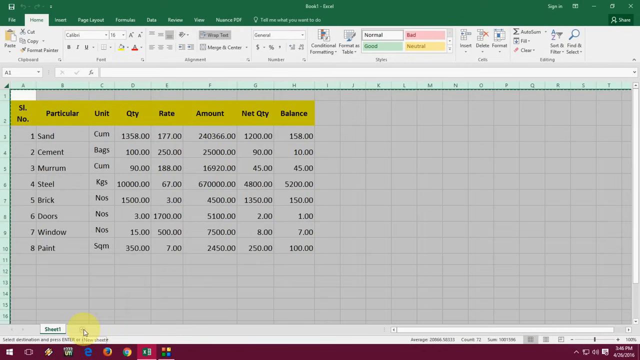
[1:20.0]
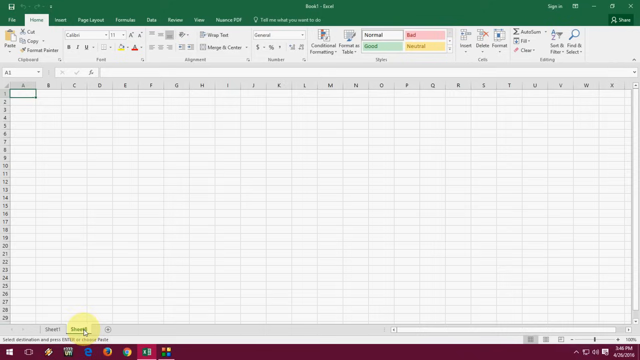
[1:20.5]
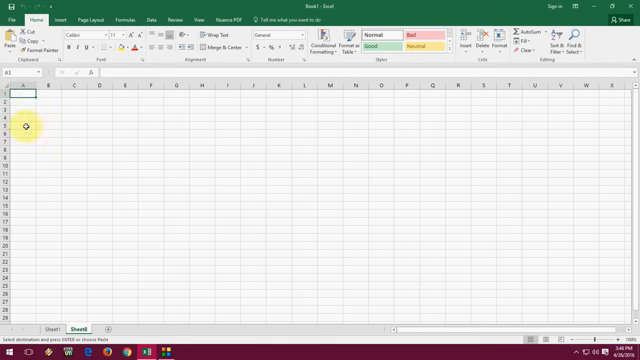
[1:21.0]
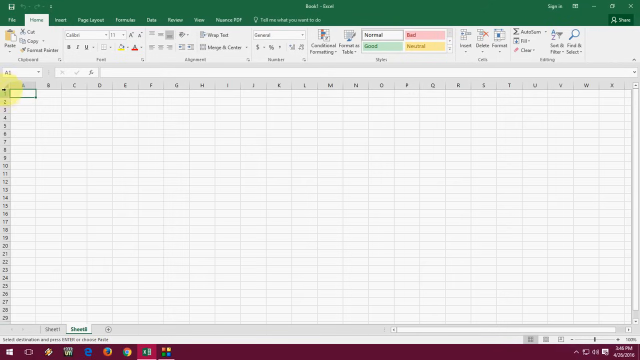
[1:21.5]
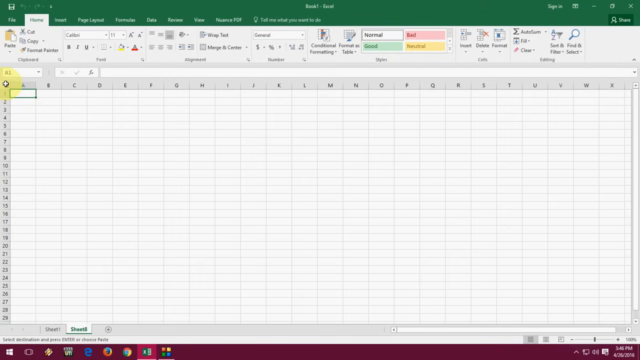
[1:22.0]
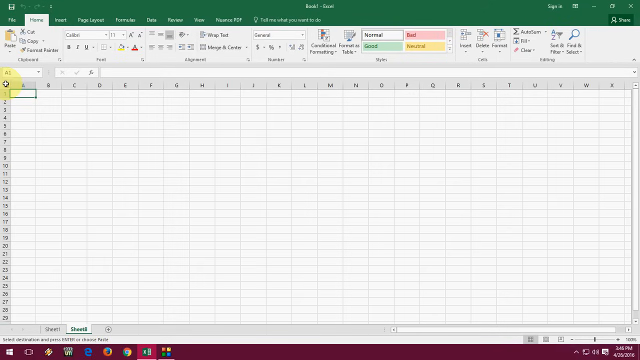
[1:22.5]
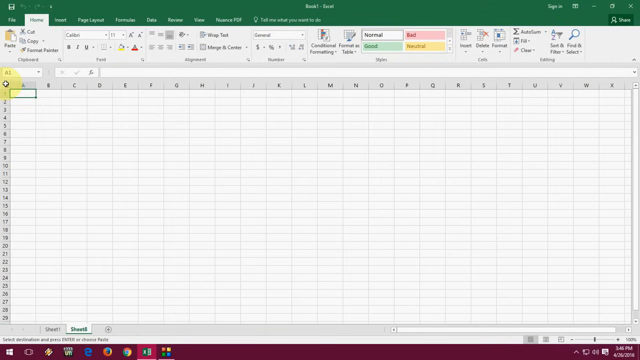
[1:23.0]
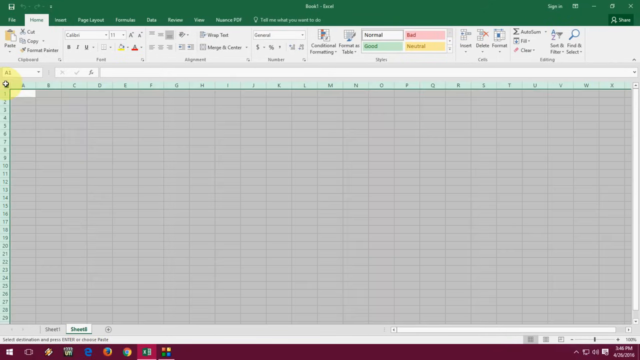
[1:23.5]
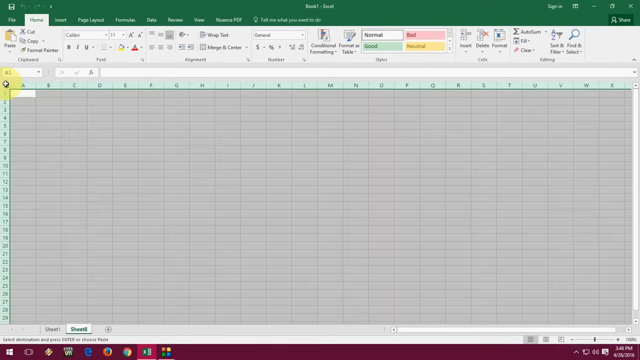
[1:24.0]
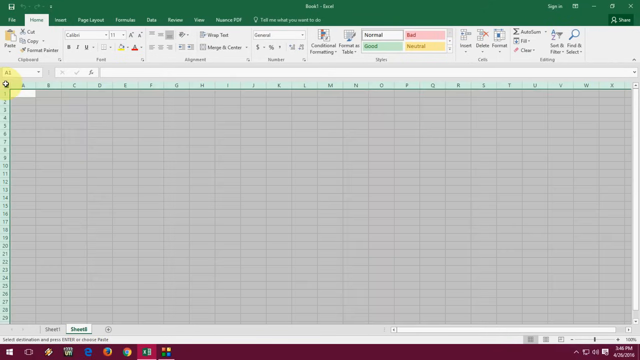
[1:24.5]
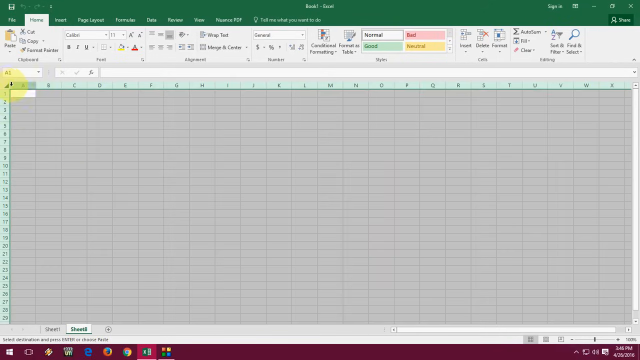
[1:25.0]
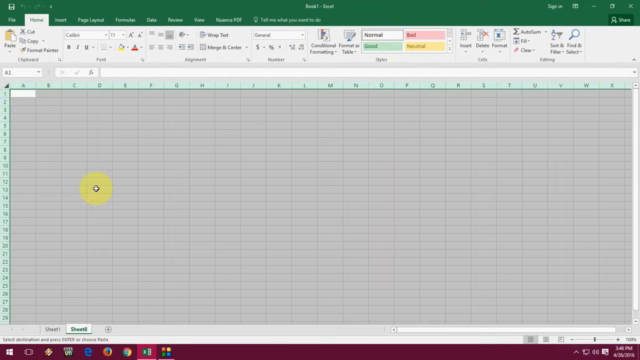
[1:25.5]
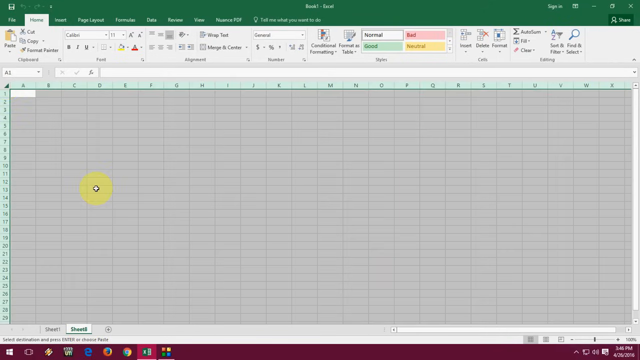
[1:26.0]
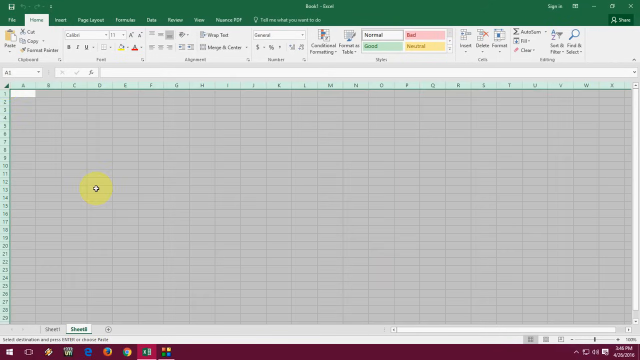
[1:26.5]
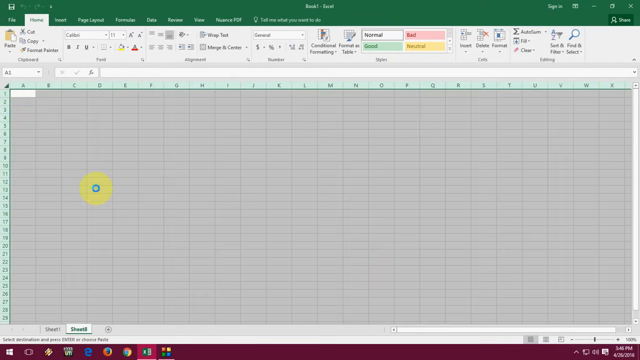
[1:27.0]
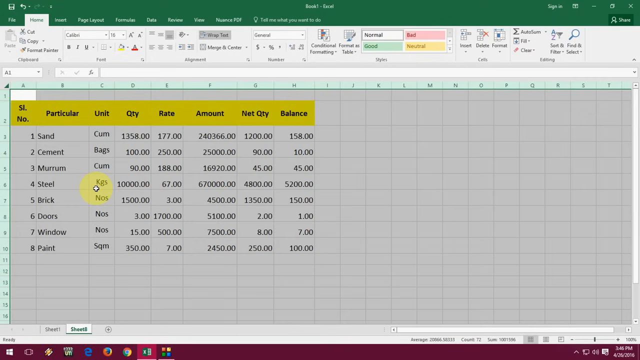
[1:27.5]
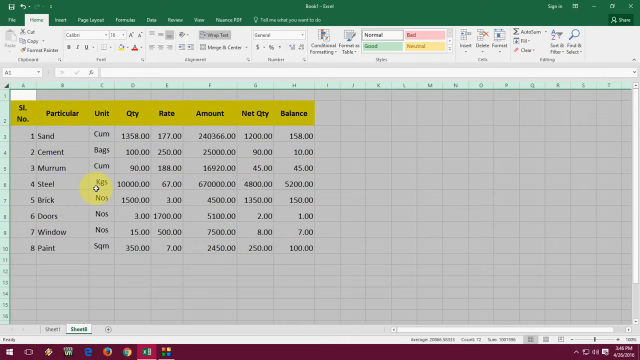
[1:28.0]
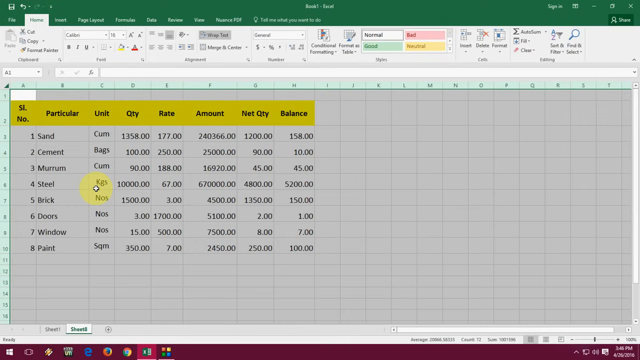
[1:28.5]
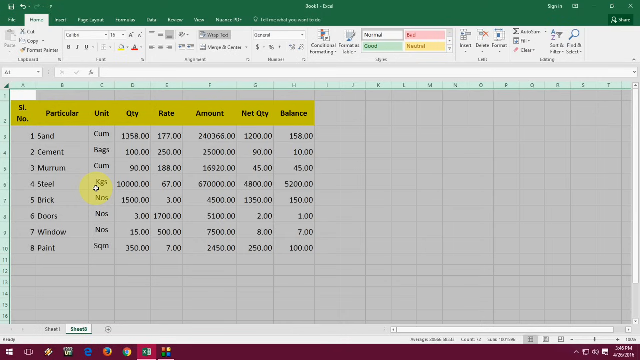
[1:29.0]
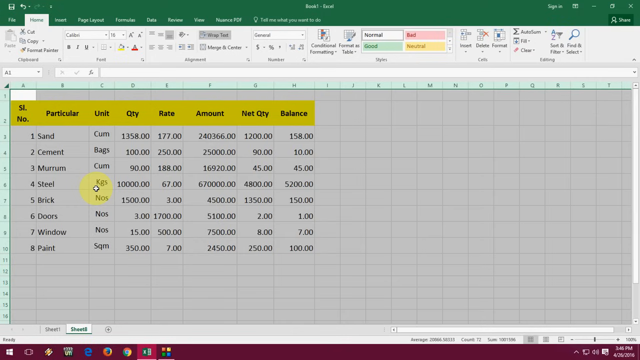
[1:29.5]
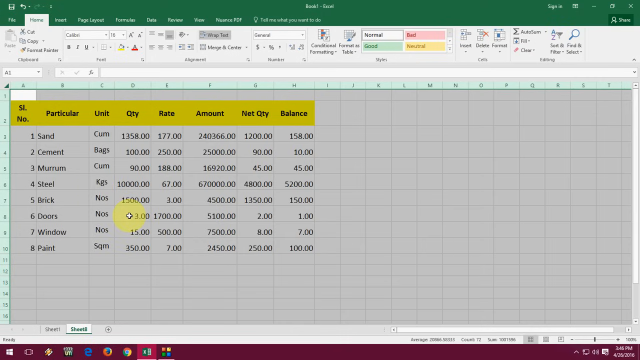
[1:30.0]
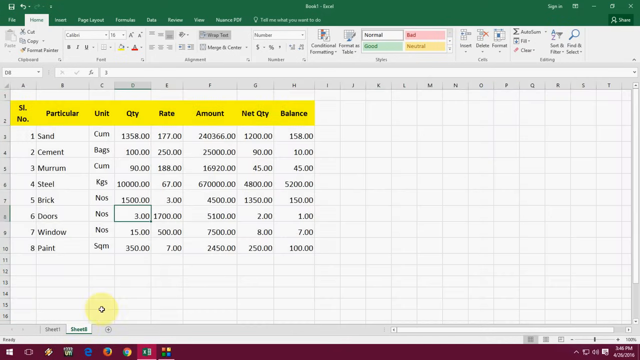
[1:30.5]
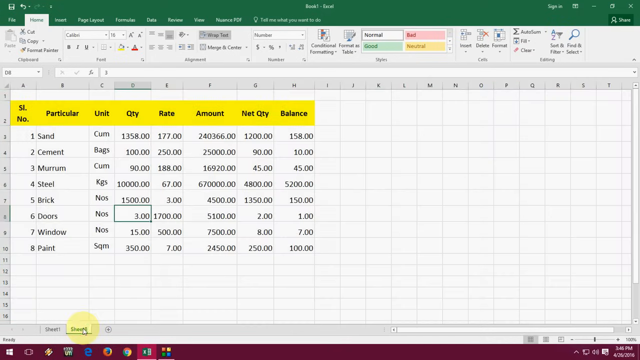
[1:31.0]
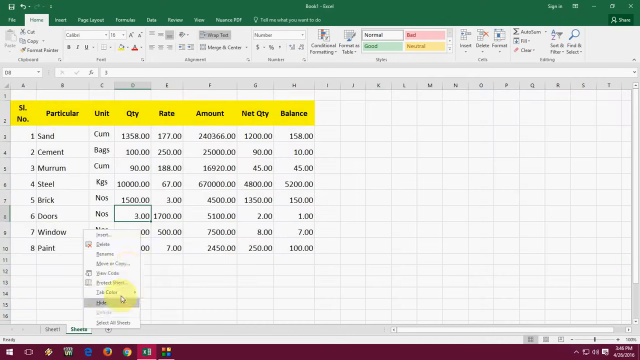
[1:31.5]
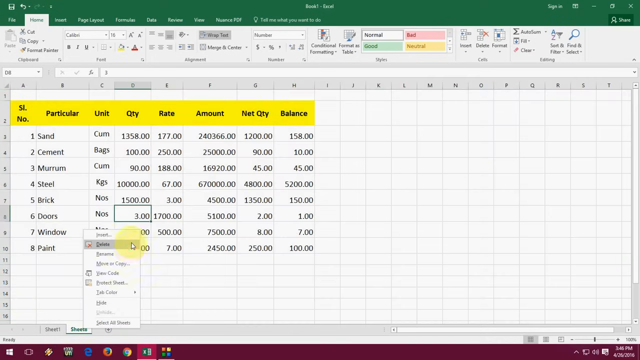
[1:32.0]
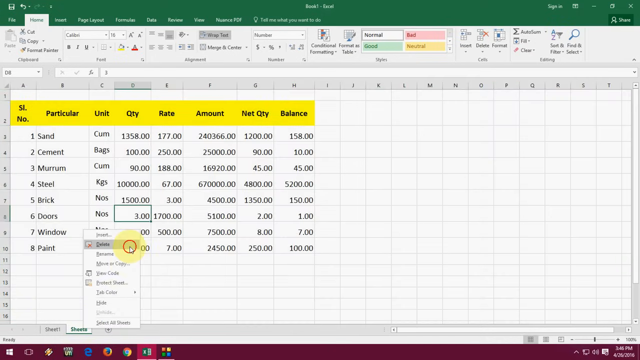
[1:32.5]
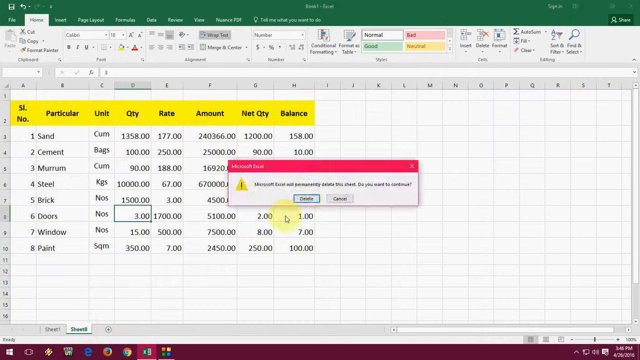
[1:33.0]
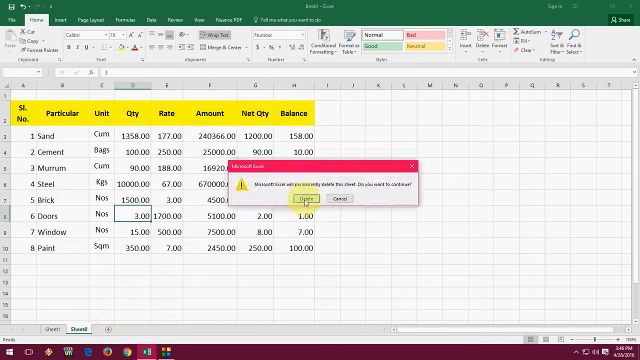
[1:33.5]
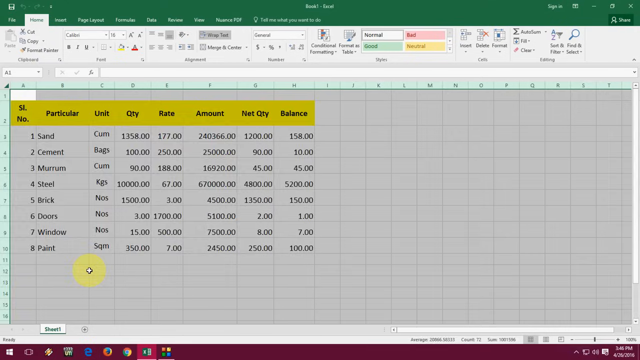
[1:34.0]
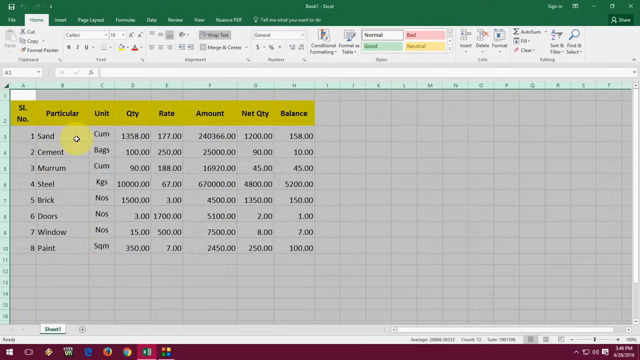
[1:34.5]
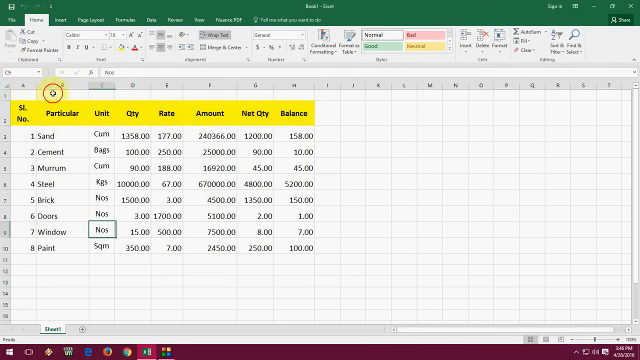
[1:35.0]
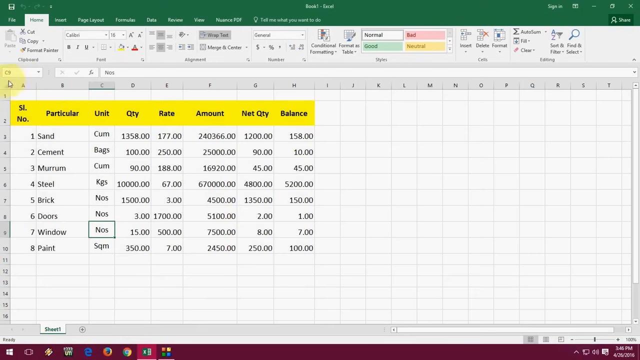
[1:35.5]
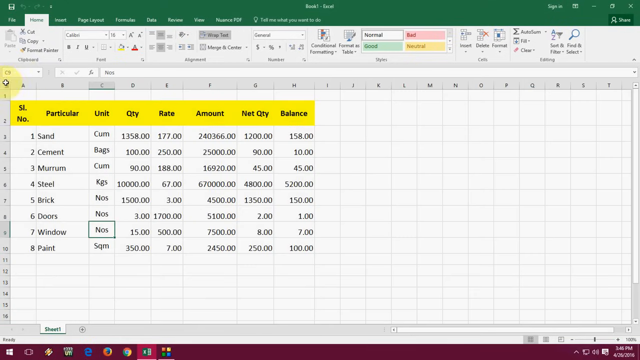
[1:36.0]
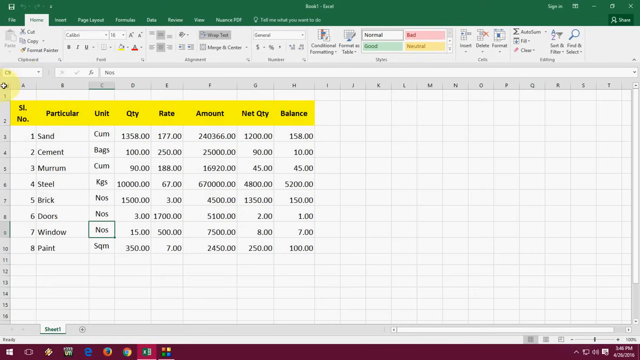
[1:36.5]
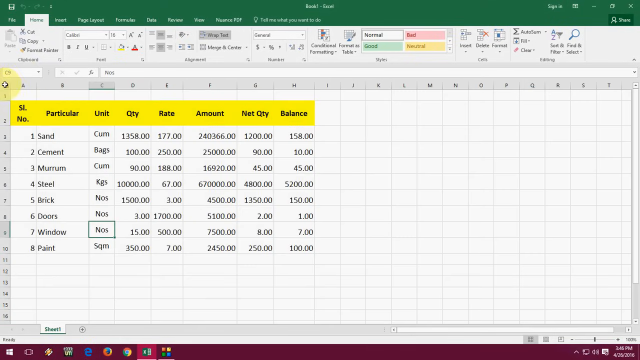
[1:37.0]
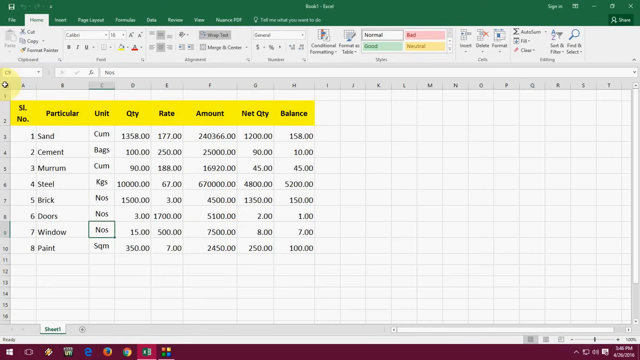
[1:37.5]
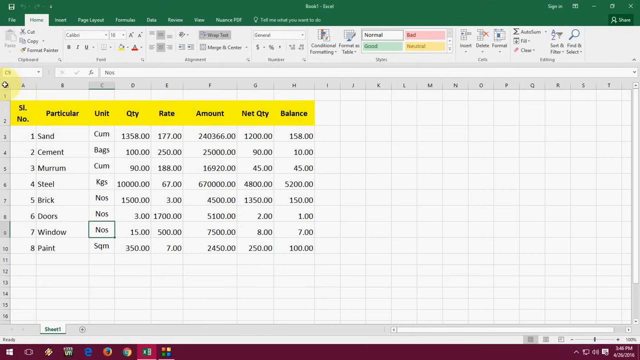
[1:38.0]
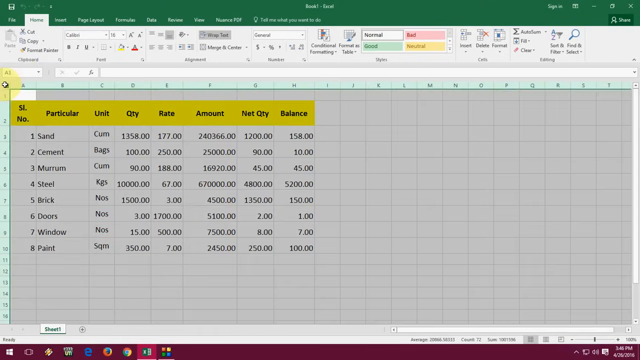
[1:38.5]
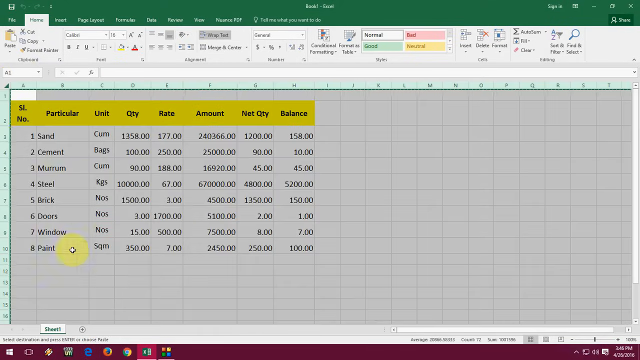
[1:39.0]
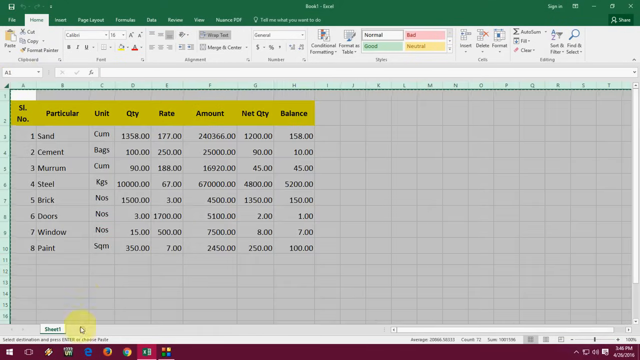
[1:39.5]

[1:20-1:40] The data entry program remains on screen. A green rectangle spans the entire top of the screen, taking up maybe about a tenth of it, with a menu in white text on it. A few words can be read: file, home, insert, page layout, apparently formulas, and possibly date, though it is hard to see because it is blurry. The rest are hard to make out and get blurrier toward the right. Below is another menu with a gray or white background, reading from left to right paste, cut, copy, followed by an unreadable stretch; there is also a bold, italic and underline section. Below the menu is a data entry chart with numbers 1 to 16 running vertically along the side and letters A through T across the top. Beneath this is a yellow banner with black text marking the sections of the data entry: "SL number," "particular," "unit," "quantity," "rate," "amount," "net quantity" and "balance."